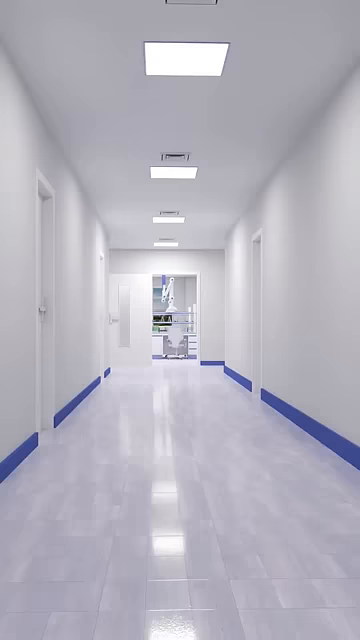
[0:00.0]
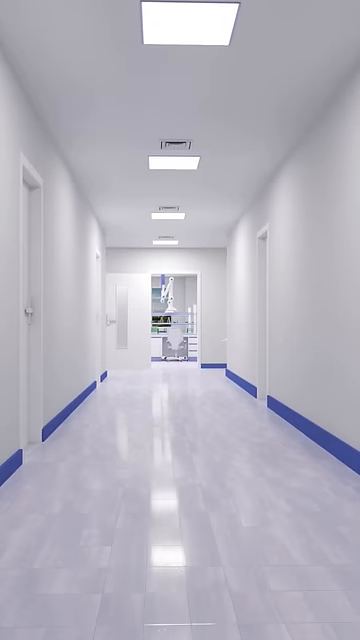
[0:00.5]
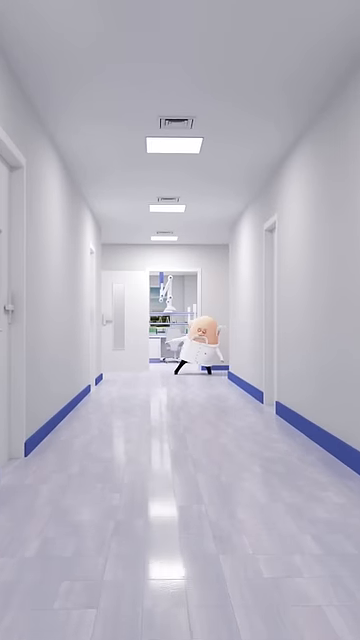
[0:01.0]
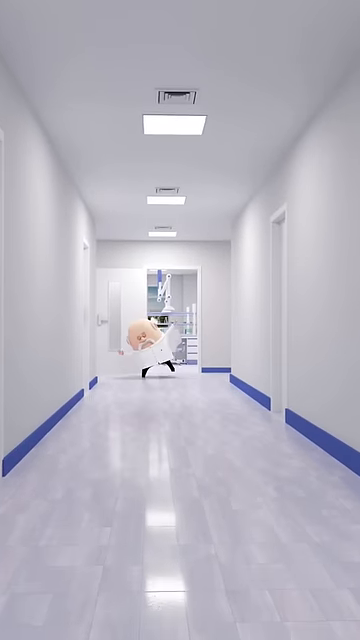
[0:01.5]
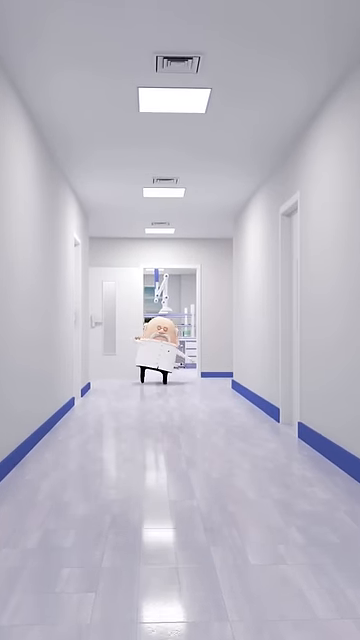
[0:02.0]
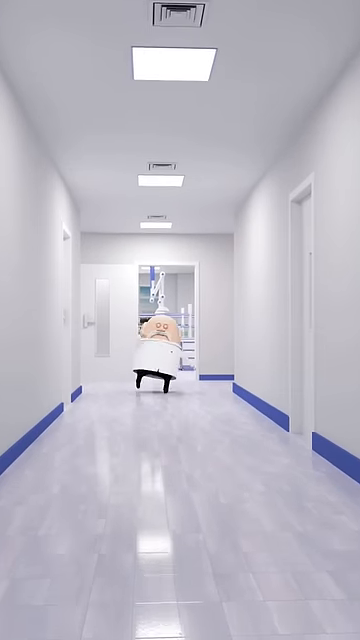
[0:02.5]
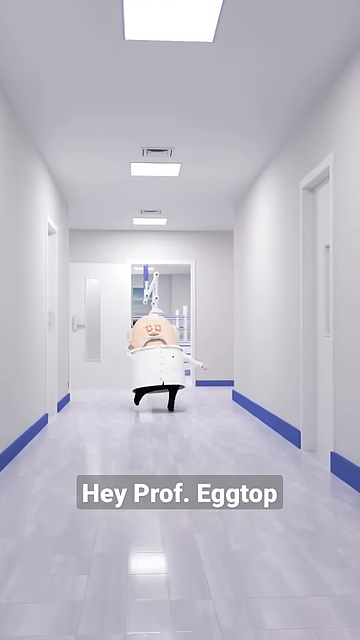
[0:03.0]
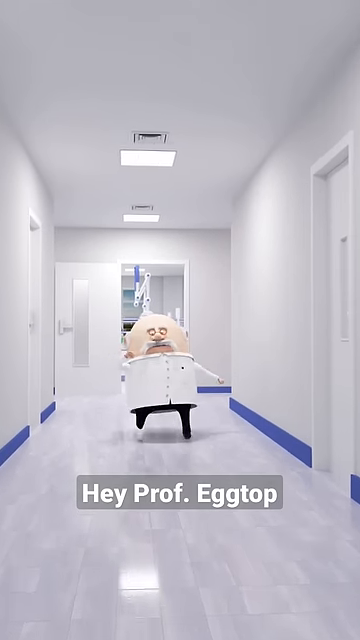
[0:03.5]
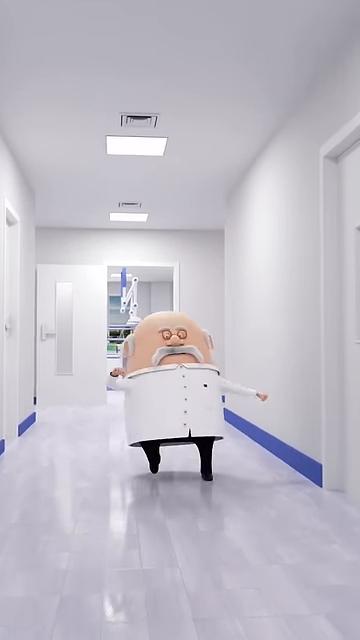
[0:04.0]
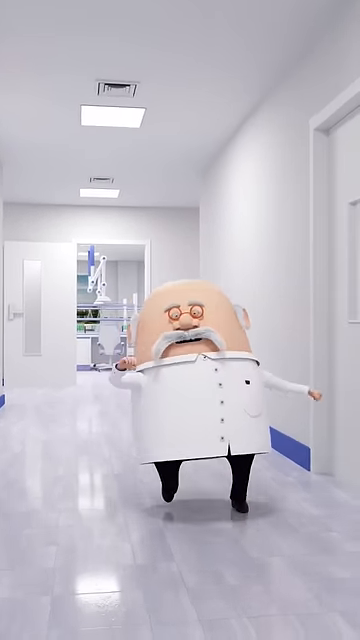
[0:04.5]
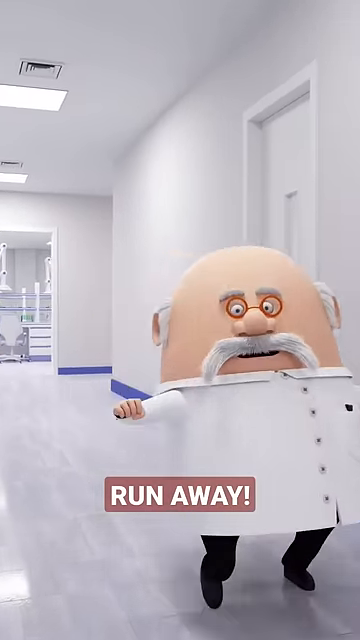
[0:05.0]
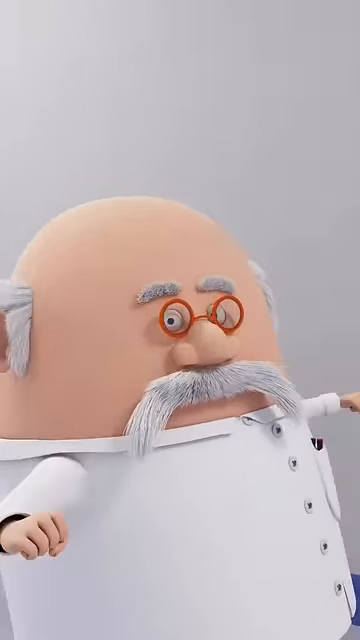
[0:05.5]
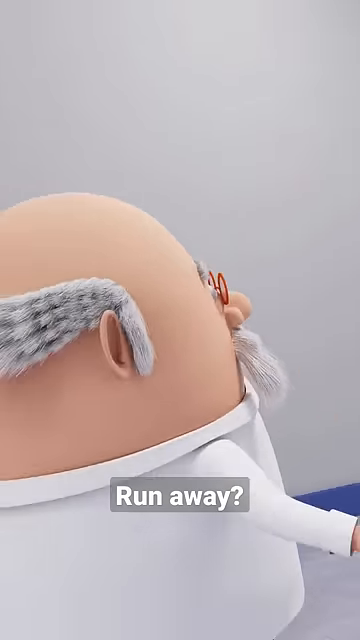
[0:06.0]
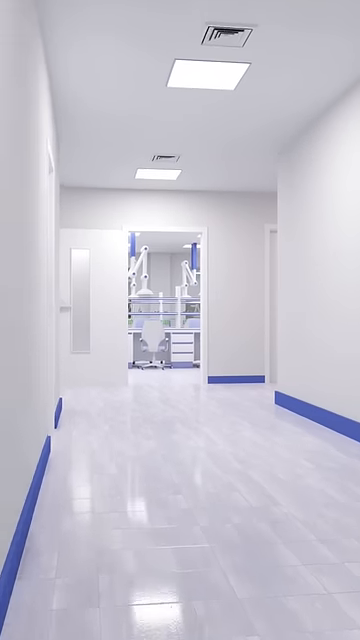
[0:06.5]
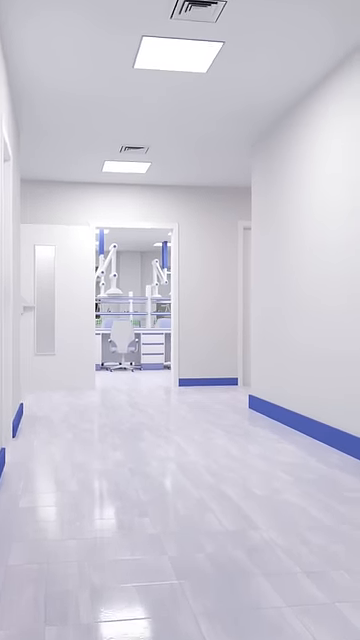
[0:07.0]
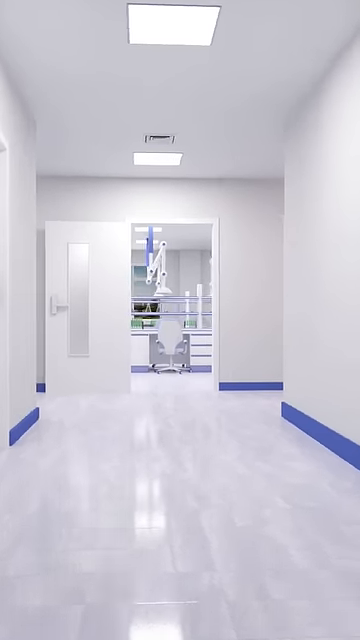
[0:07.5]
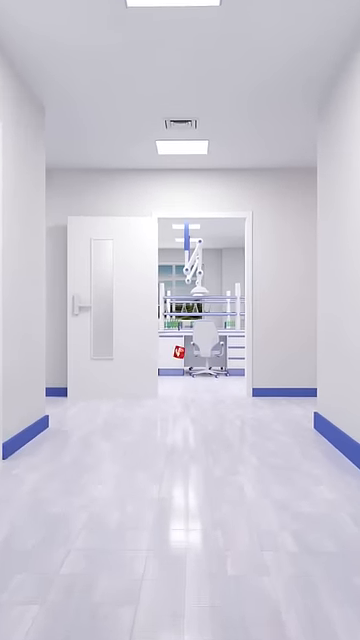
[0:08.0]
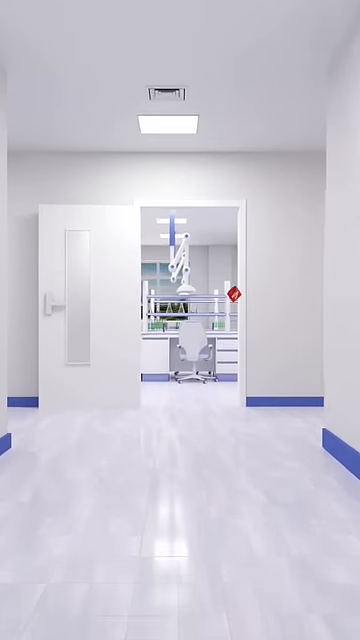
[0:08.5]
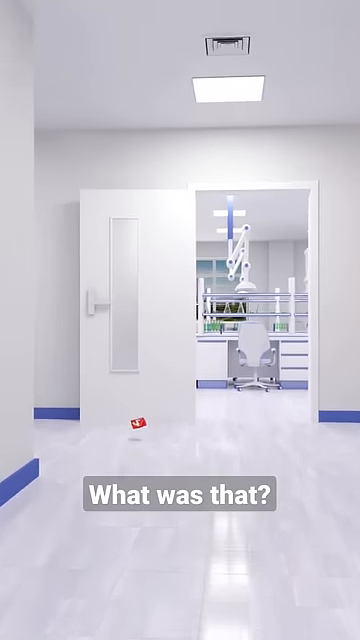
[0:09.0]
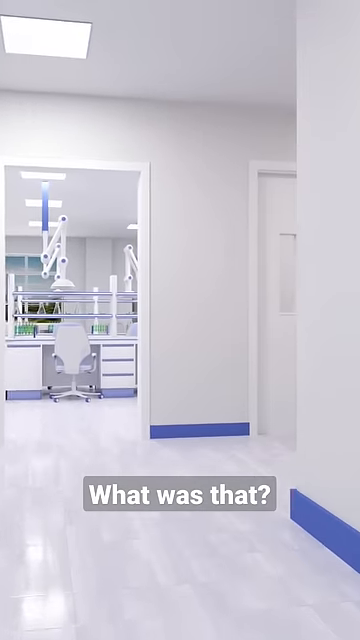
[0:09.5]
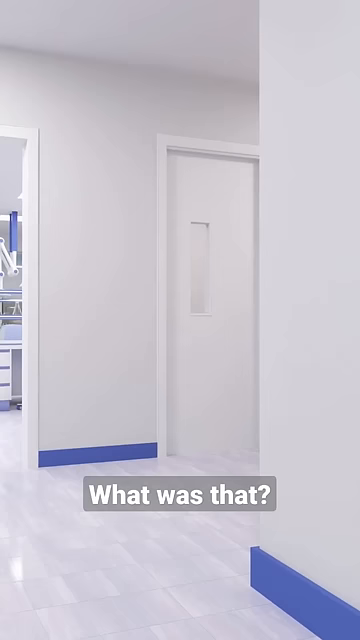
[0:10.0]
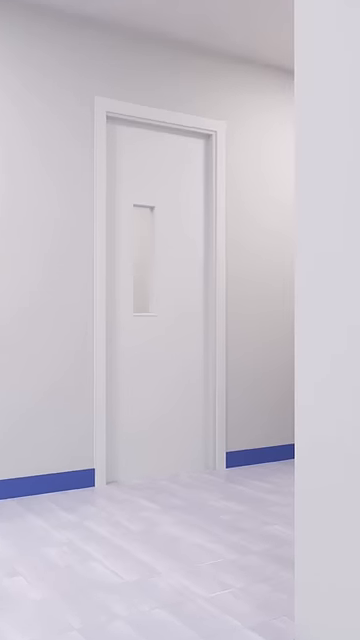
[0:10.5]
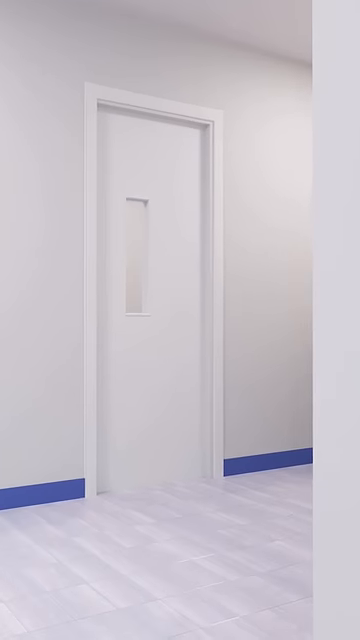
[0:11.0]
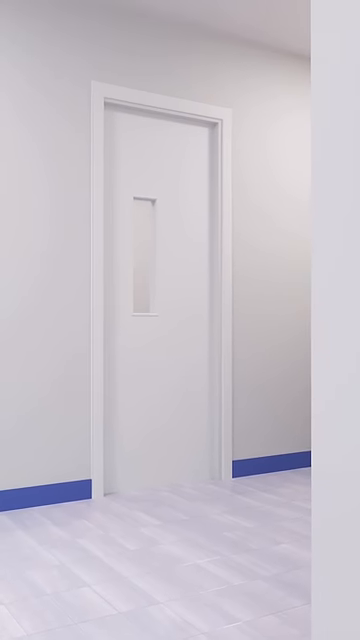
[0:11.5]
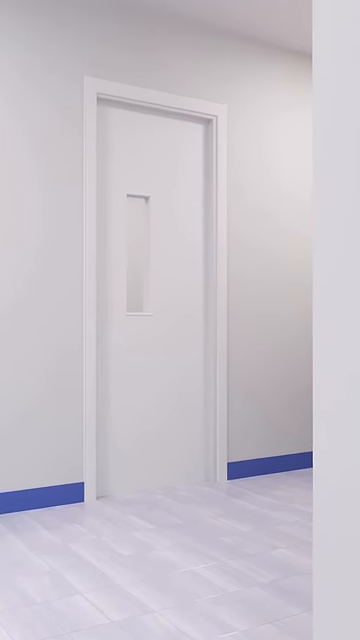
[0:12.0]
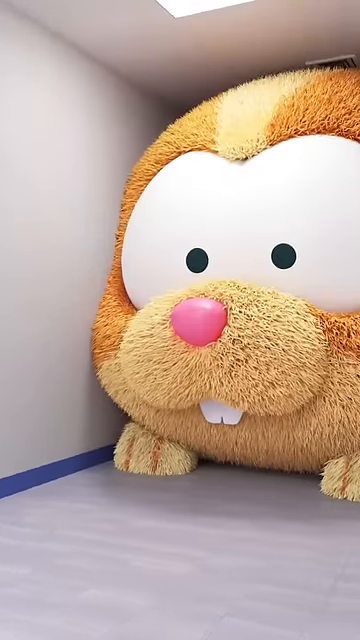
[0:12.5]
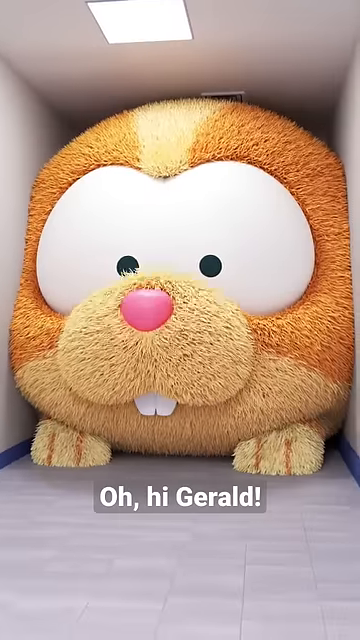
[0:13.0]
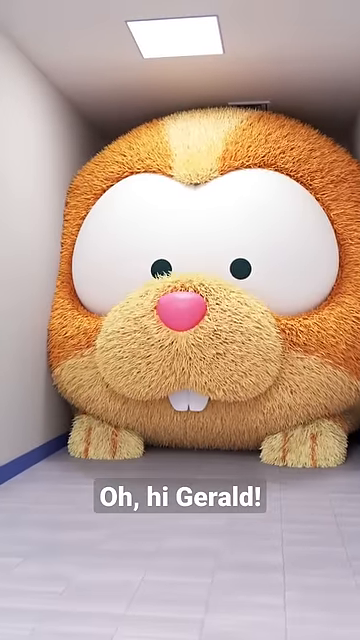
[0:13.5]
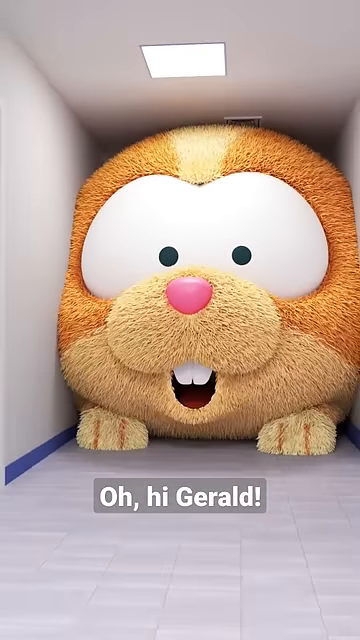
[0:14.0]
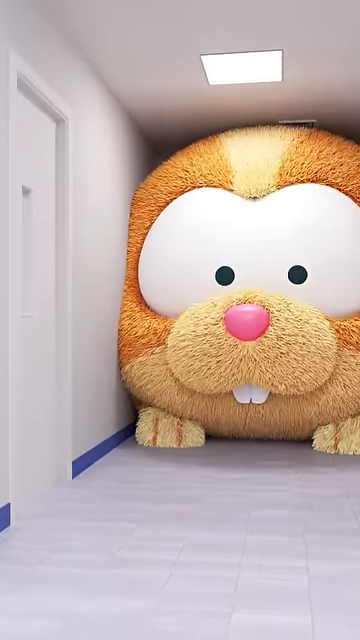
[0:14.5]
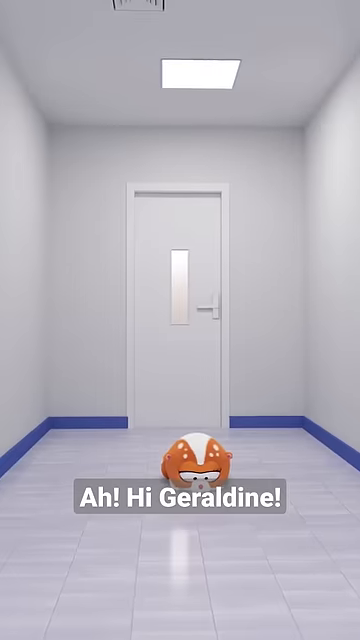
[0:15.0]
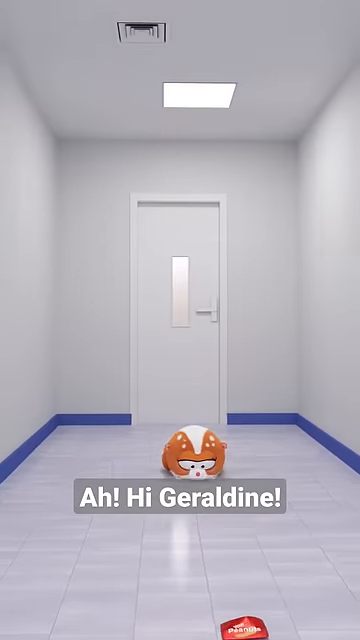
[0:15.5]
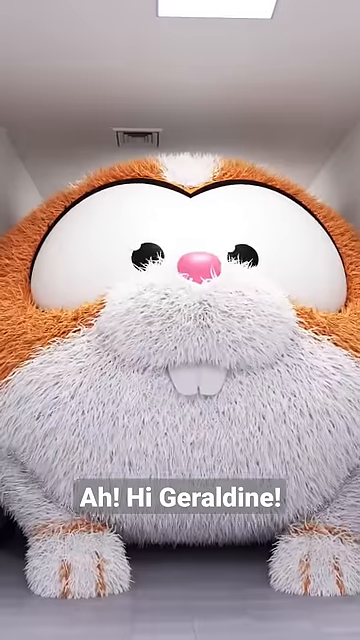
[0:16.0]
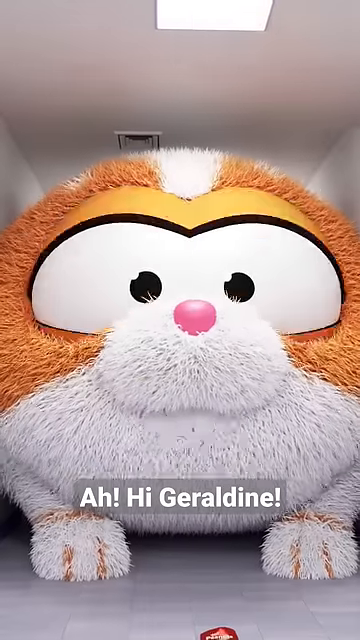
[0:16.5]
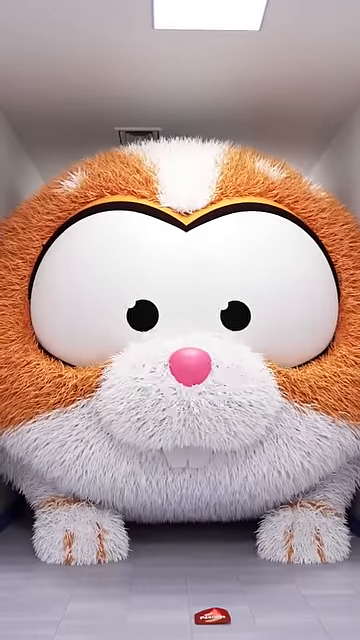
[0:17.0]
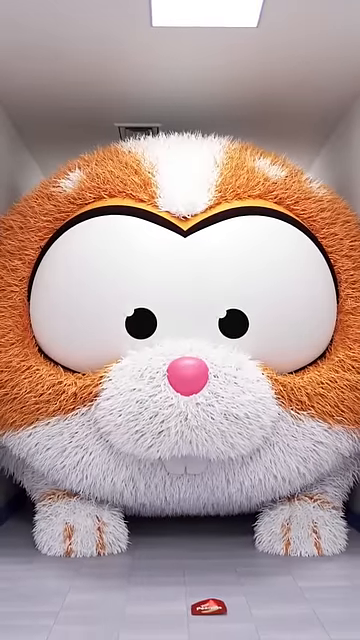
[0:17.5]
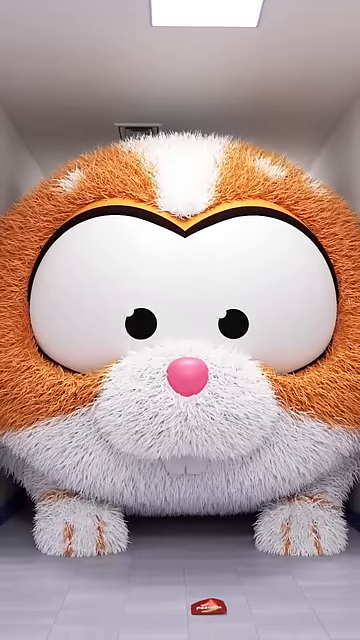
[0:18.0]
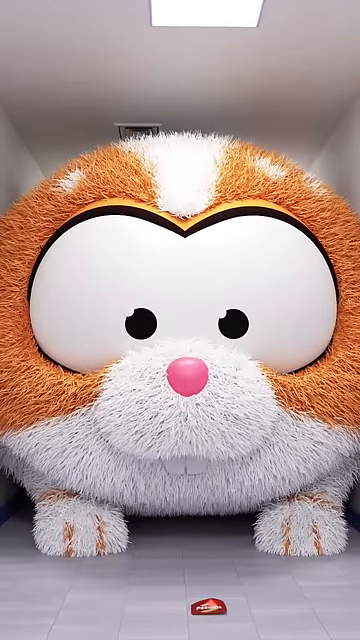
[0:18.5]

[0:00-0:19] A professor, an older balding man with a white mustache, runs terrified down halls that almost look like the halls of a hospital, fleeing from something. The dialogue appears as text on the screen: someone calls to him, "hey Professor Gerald," and he screams, "run away, run away." Text then reads "what was that," and the screen pans over to an enlarged animal that looks like either a hamster or some sort of cat. Its face is visible, with a pink nose, orange fur, white cheeks and white paws, and it says "oh, hi Gerald" when spotted. Two different versions of the animal appear: when it is first seen it is orange all the way through, while at the end it is orange and white.